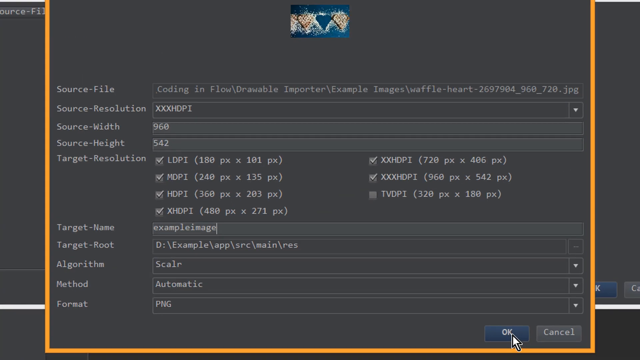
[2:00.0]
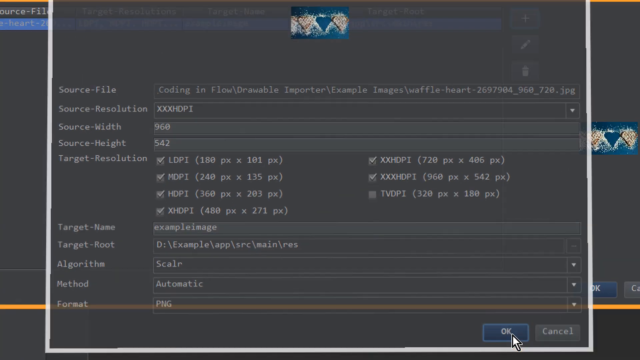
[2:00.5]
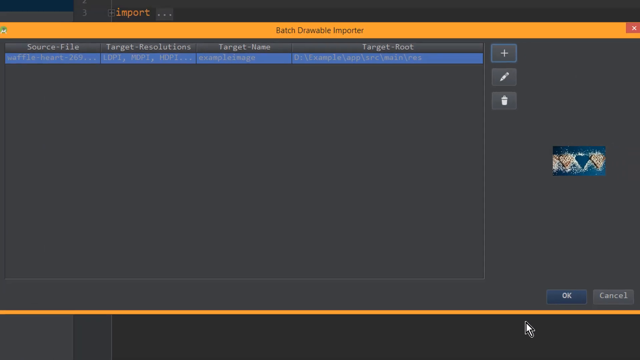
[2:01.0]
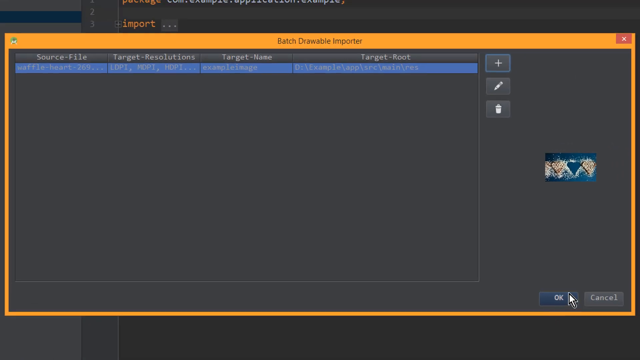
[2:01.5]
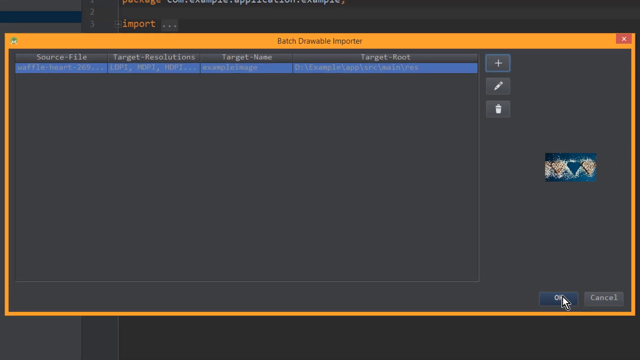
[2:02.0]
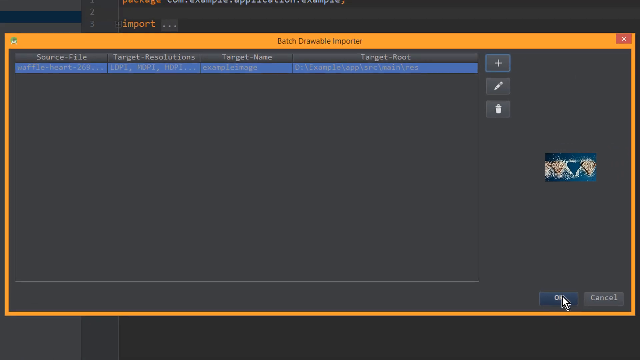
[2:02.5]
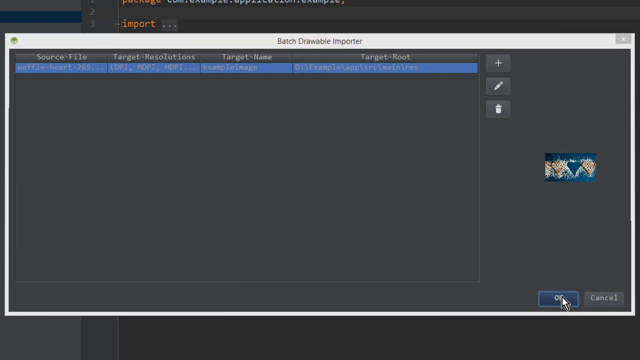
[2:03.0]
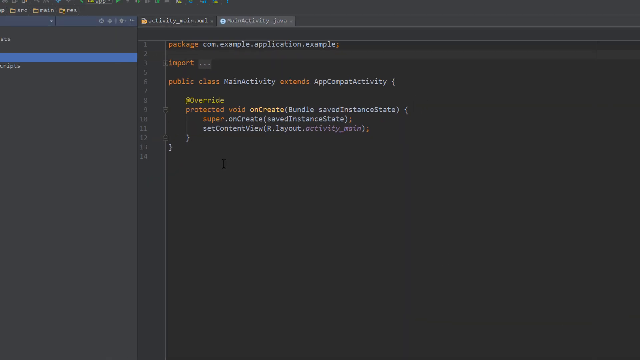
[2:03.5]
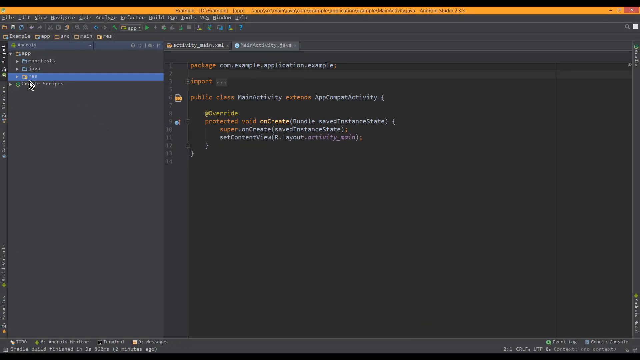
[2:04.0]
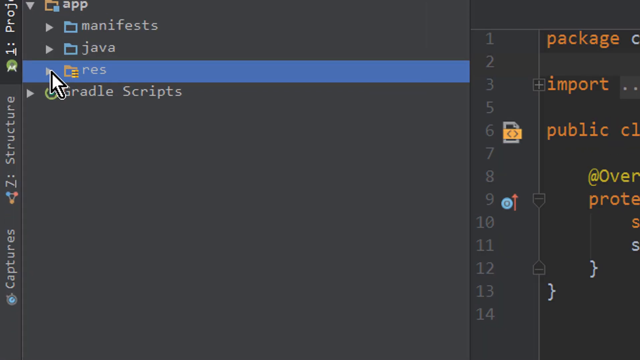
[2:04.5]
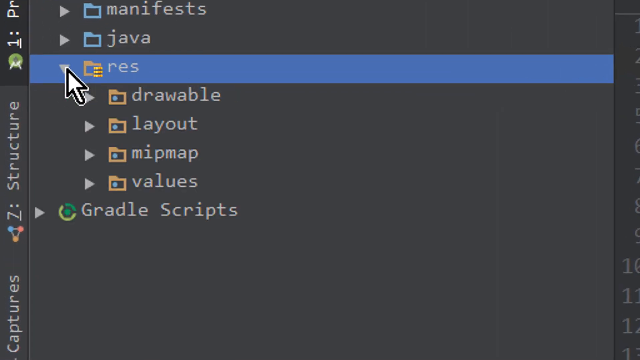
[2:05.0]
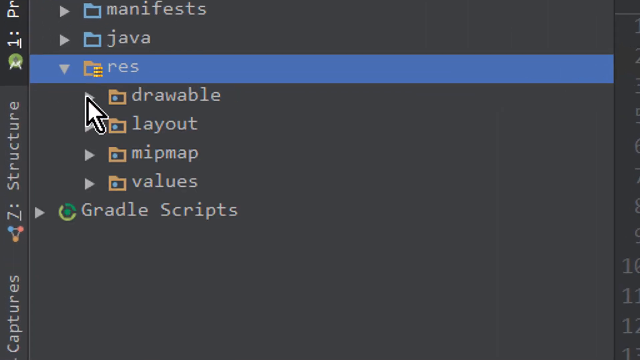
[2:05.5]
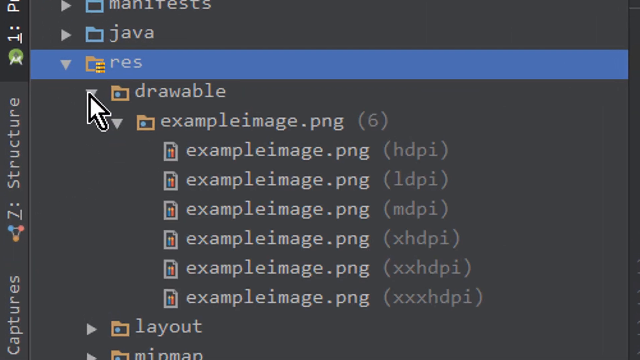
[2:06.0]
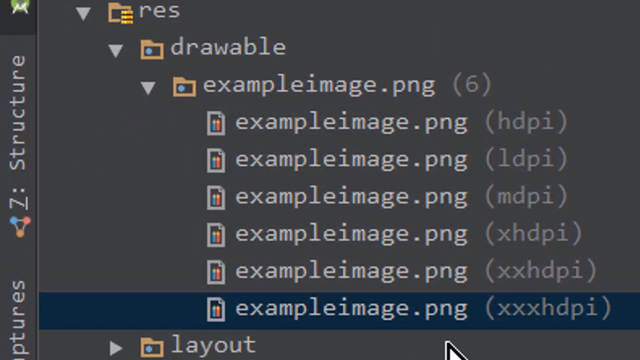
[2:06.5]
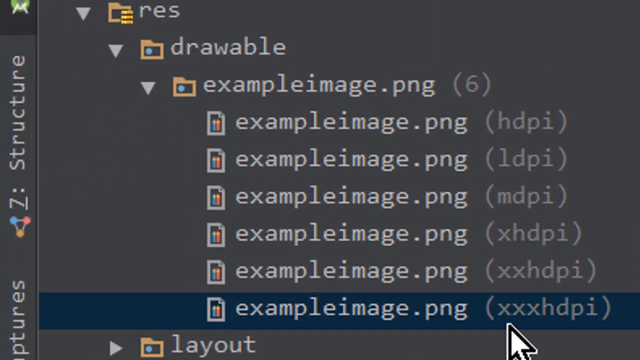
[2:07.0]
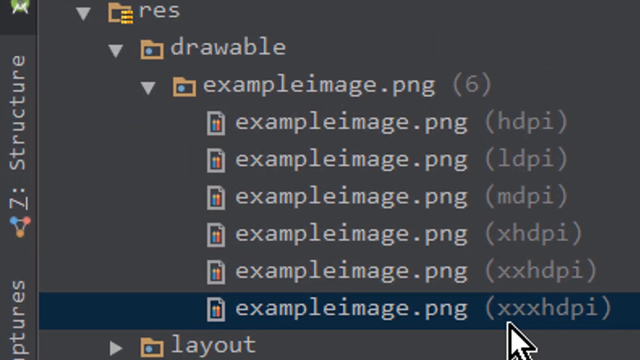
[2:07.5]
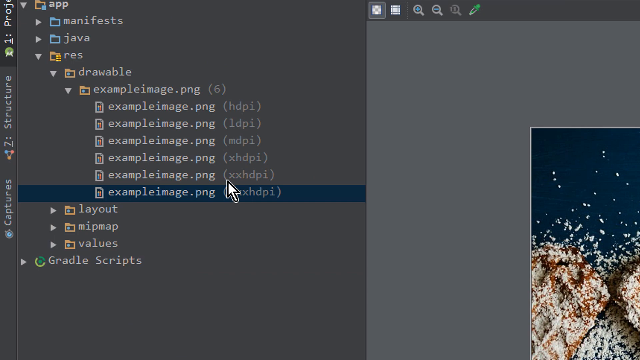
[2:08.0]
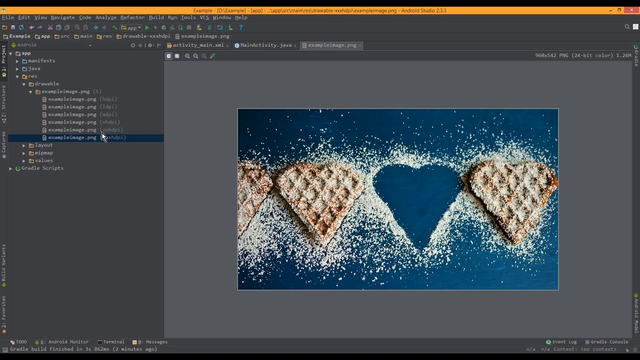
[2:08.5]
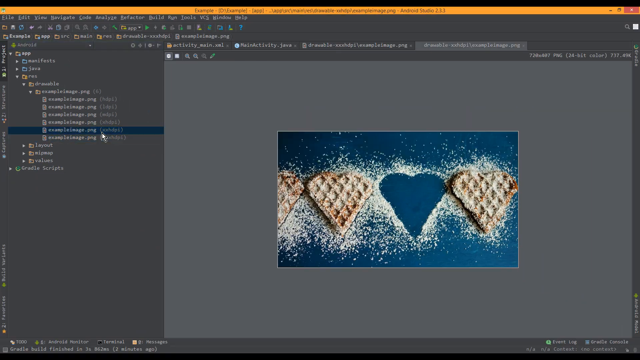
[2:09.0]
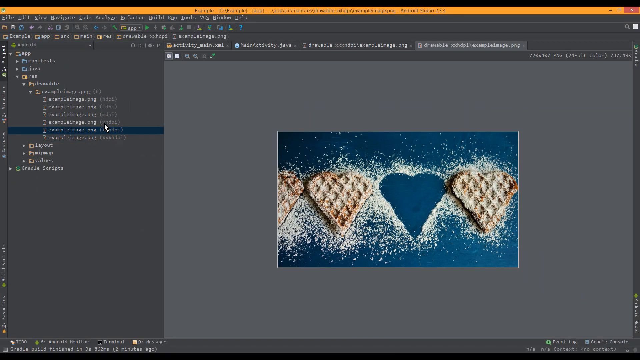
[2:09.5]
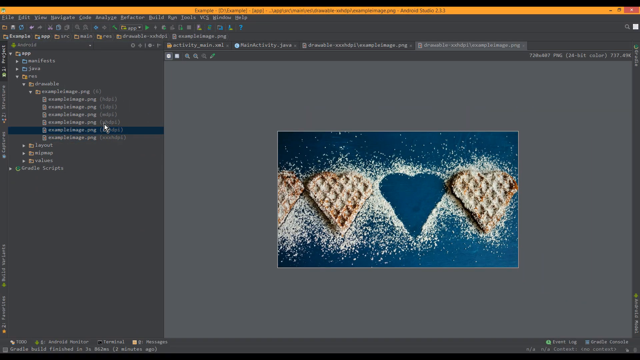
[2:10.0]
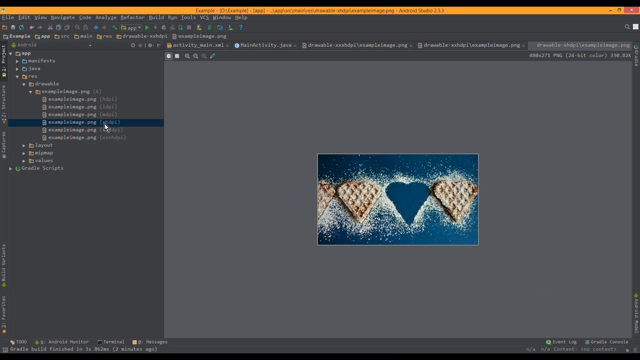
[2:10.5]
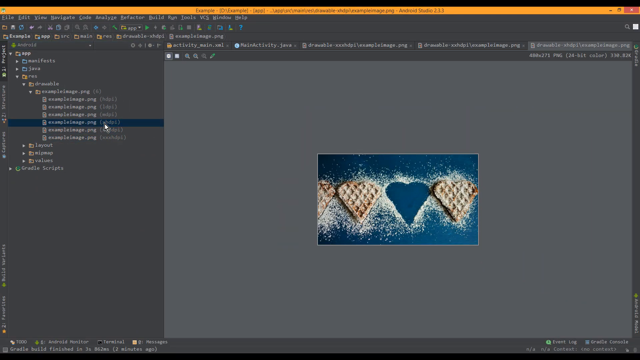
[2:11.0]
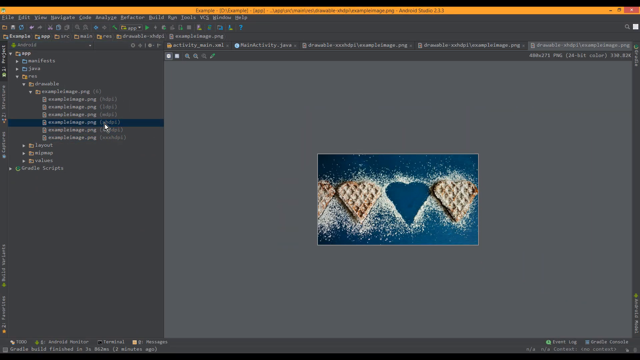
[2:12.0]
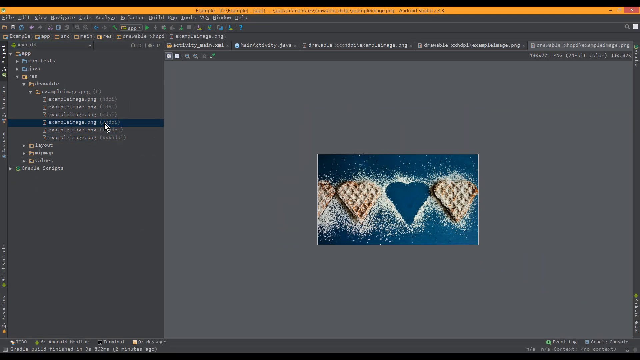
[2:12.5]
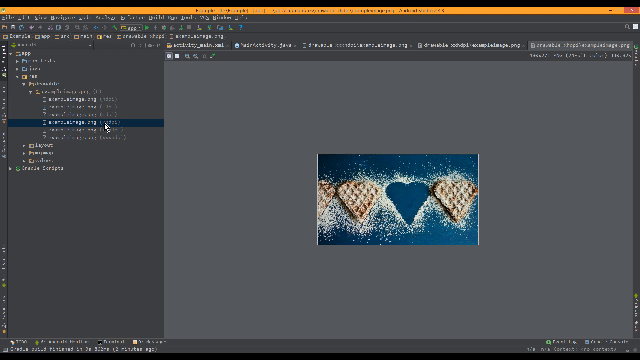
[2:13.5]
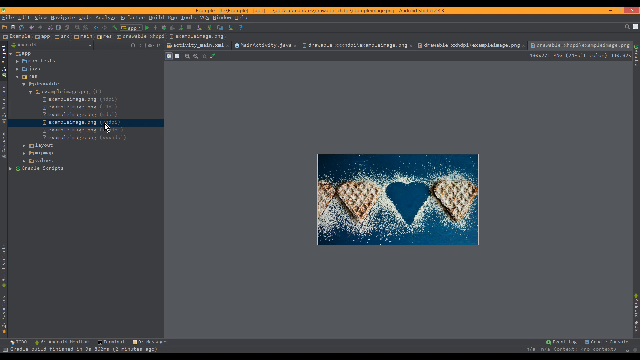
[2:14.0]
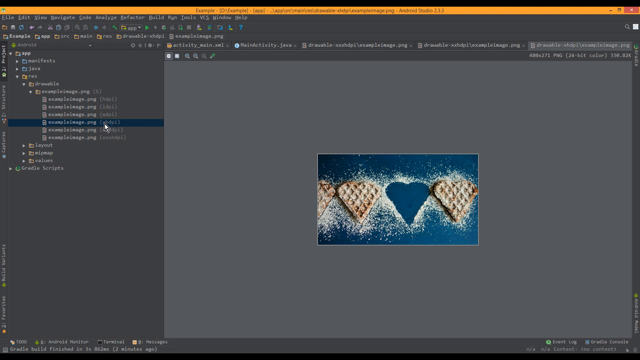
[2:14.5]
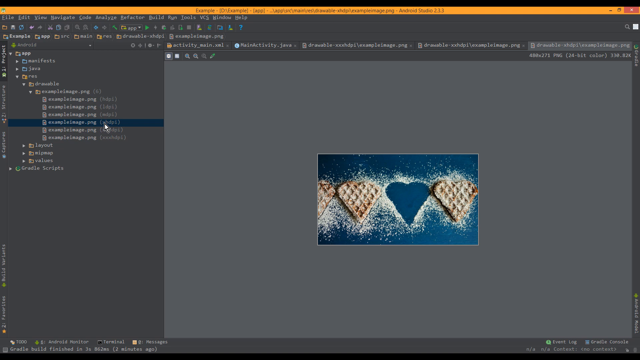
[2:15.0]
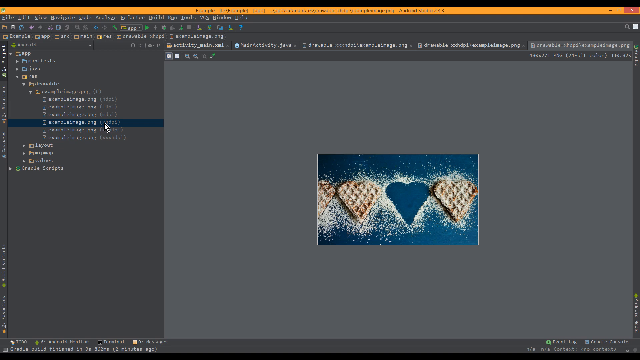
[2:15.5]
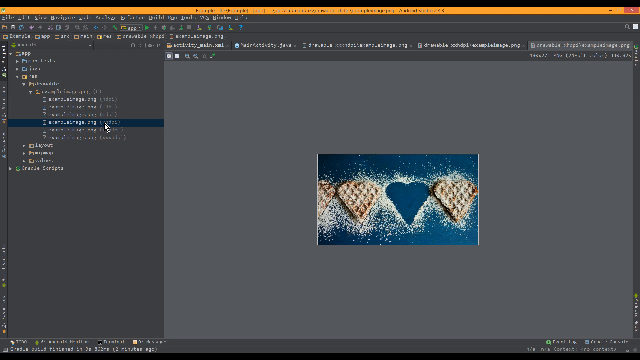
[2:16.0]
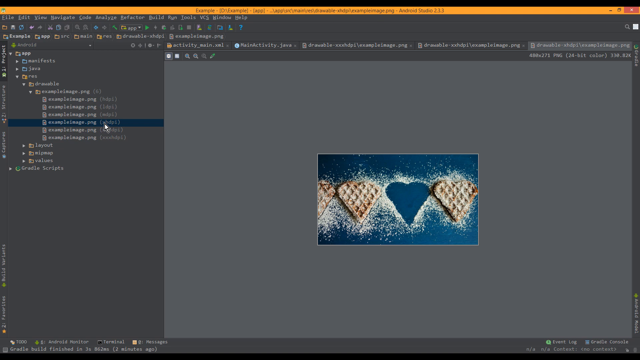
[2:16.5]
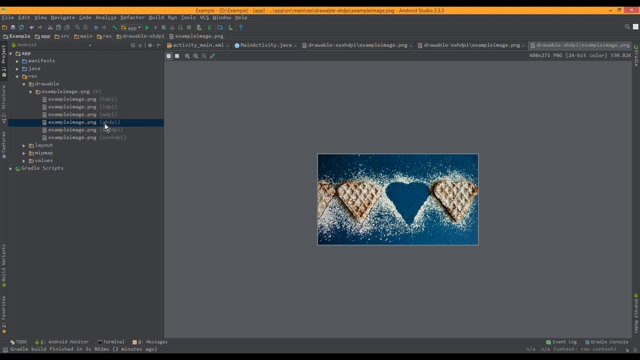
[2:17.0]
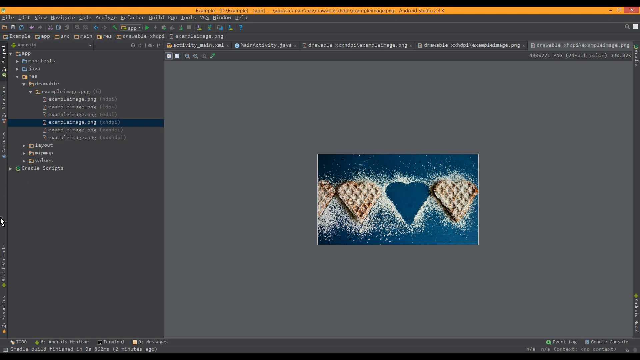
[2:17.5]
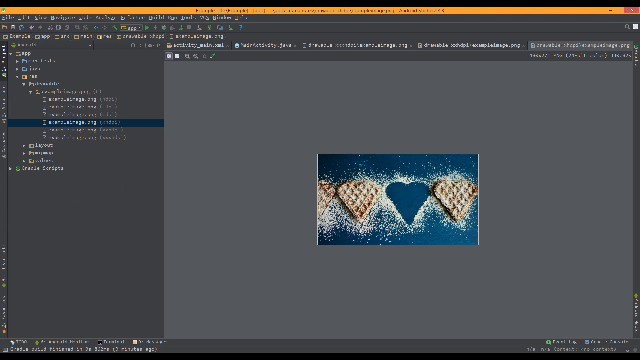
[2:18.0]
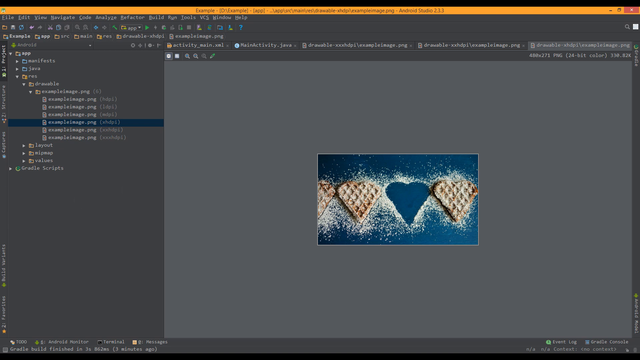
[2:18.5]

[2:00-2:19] An overview of the batch drawable importer box shows it open with an orange border and a dark grey inside. At the top of the box, the selected source file, the waffle heart file, is highlighted in blue. The mouse hovers over a navy blue button at the bottom right of the screen with white text reading "okay". The user clicks the okay button, and the view transitions to an overview of the folders in the top left corner of the main screen. Under res, the user opens a folder called "drawable" and selects example image .png xxxhdpi. The image appears on the right side of the screen on a slightly lighter grey background. The user clicks on one of the other options on the left side of the screen, but nothing visibly changes.